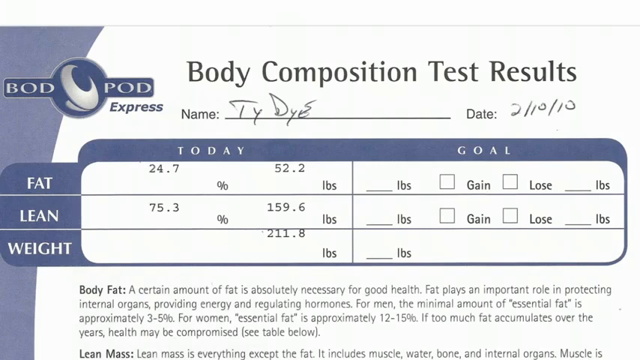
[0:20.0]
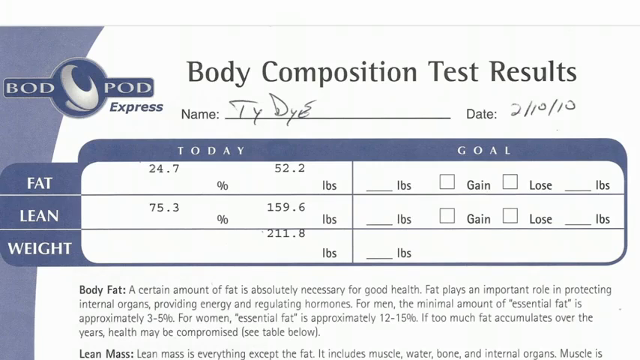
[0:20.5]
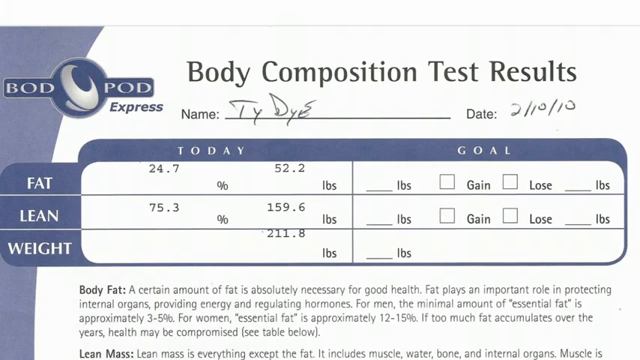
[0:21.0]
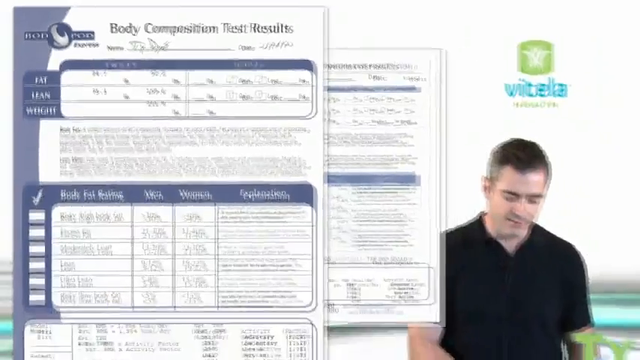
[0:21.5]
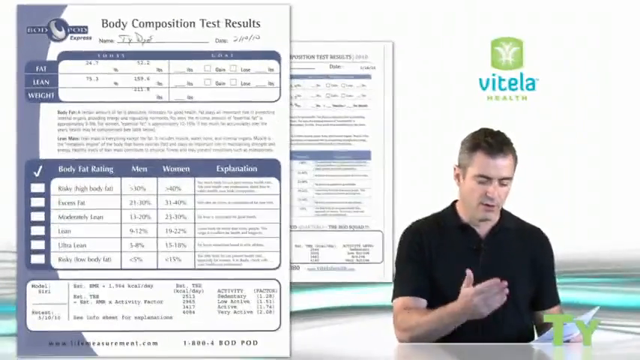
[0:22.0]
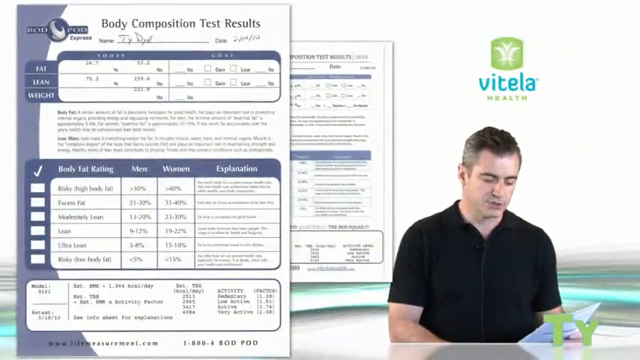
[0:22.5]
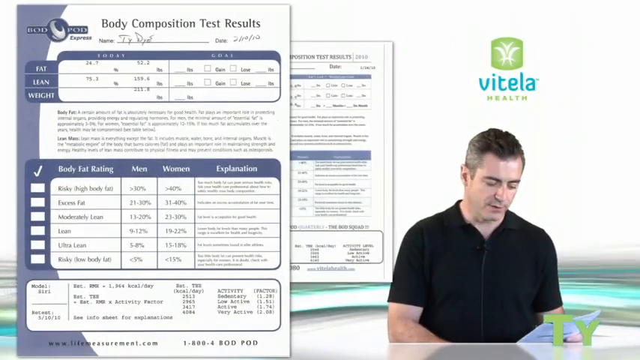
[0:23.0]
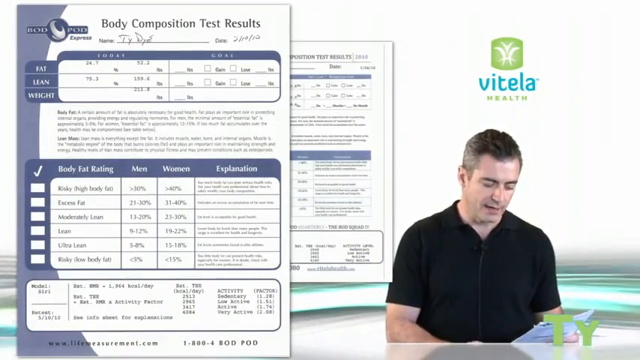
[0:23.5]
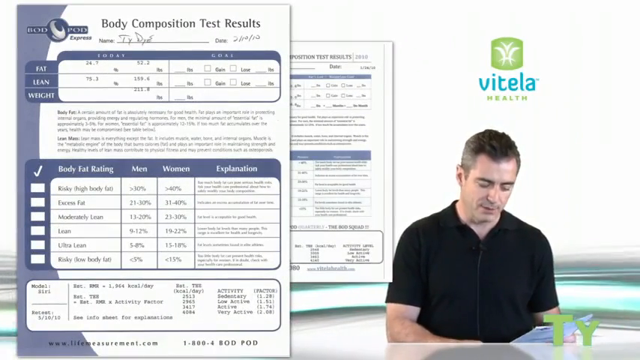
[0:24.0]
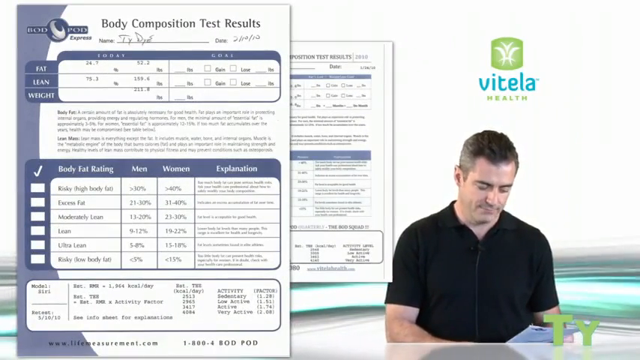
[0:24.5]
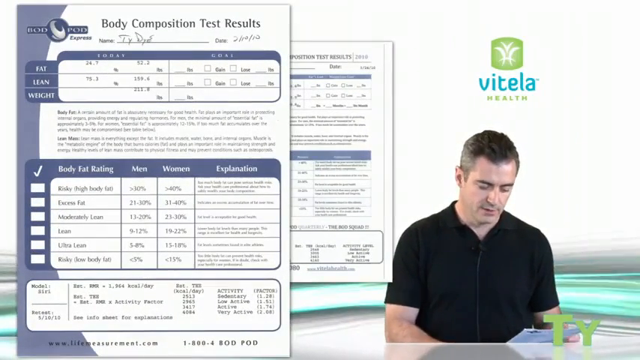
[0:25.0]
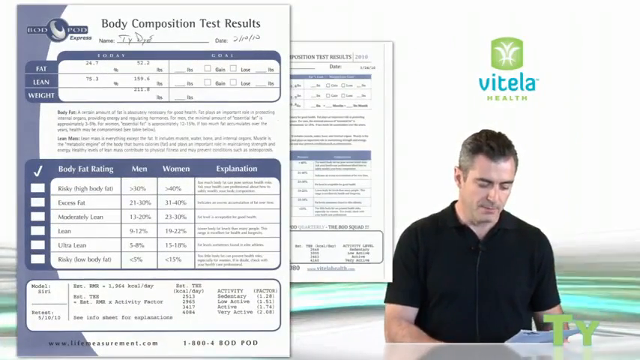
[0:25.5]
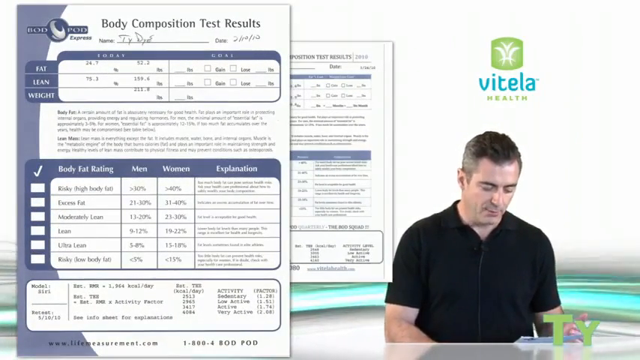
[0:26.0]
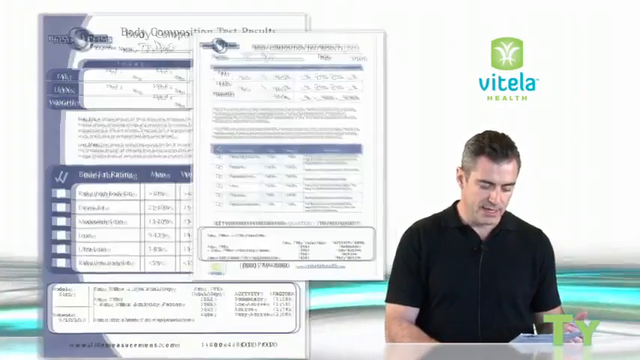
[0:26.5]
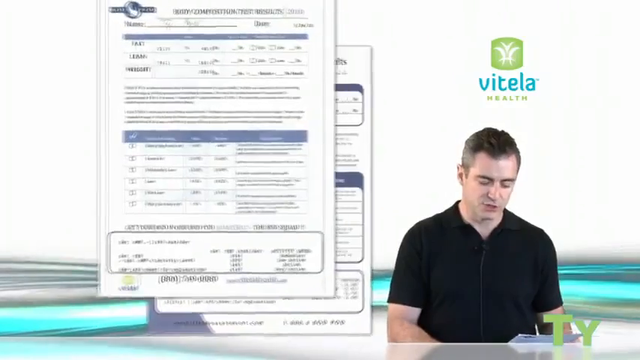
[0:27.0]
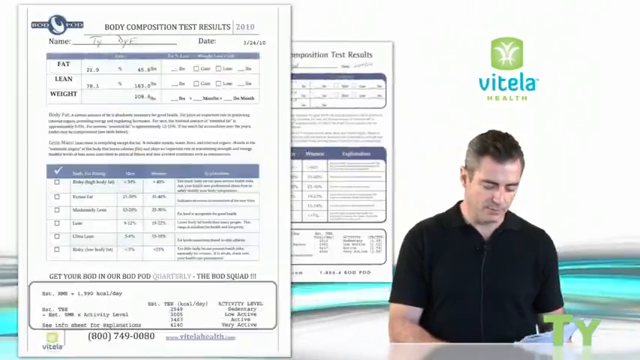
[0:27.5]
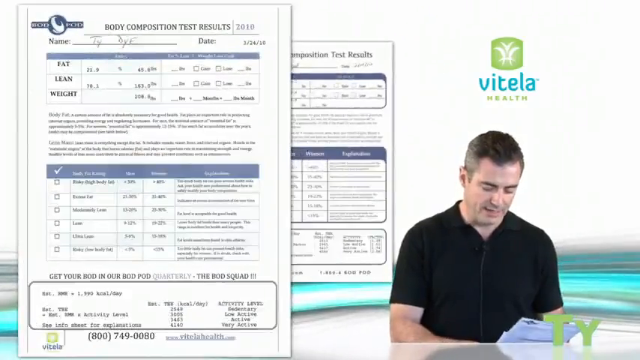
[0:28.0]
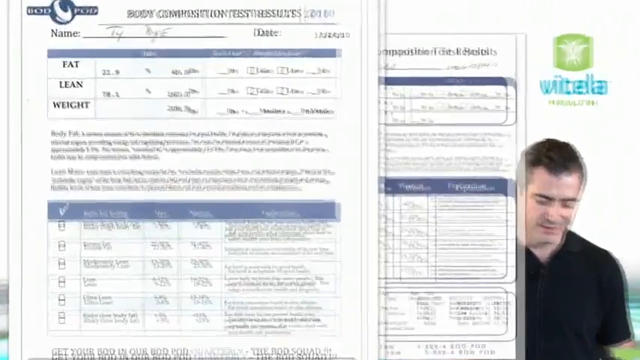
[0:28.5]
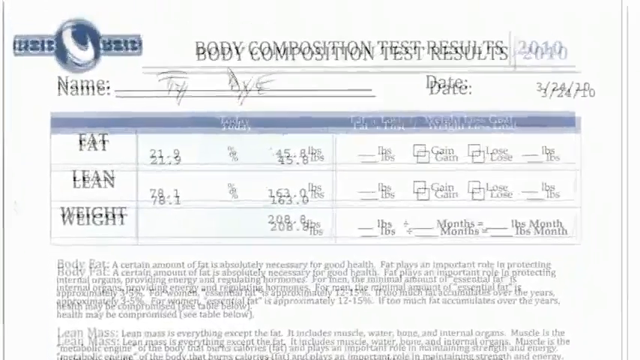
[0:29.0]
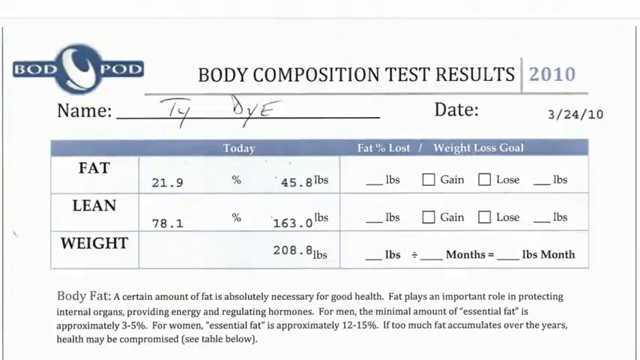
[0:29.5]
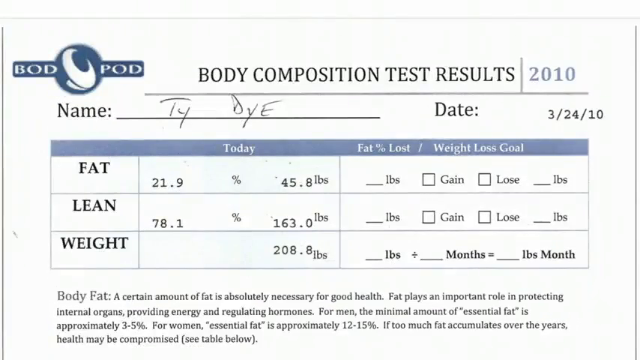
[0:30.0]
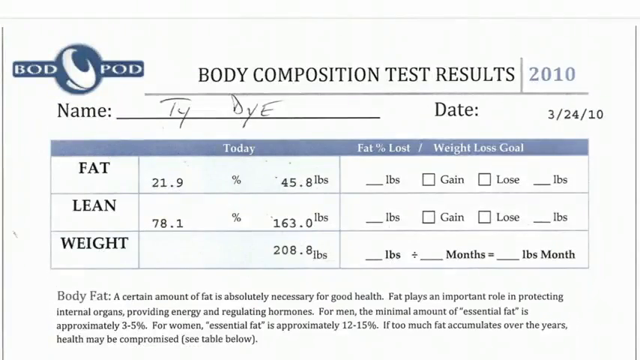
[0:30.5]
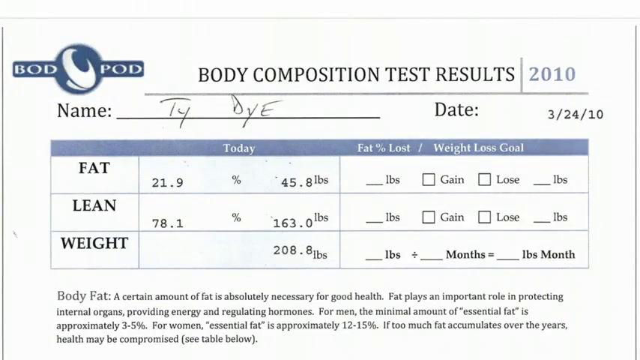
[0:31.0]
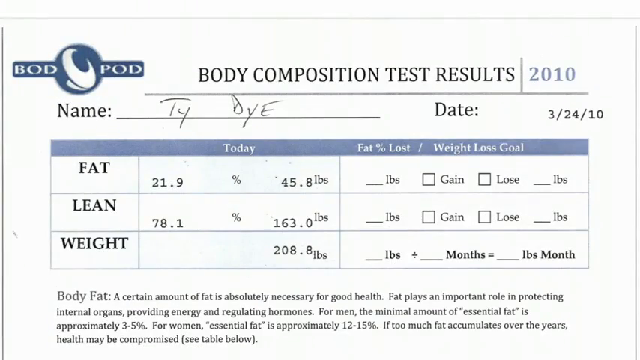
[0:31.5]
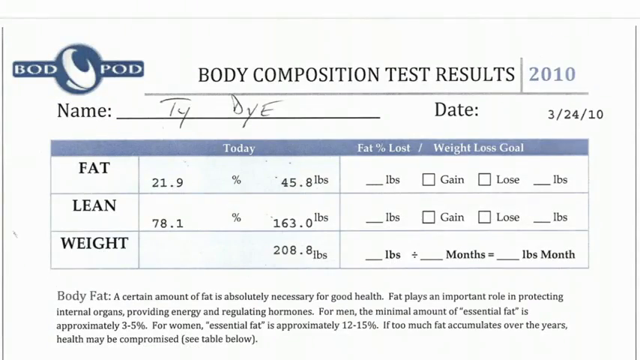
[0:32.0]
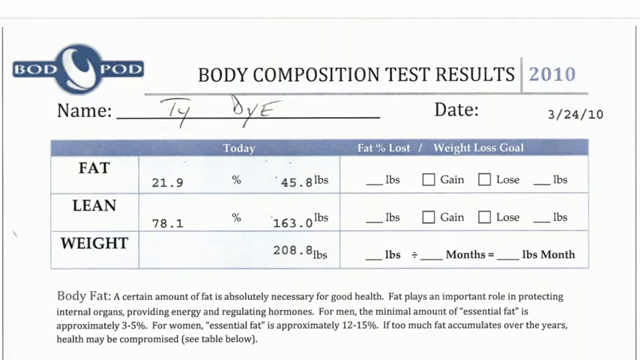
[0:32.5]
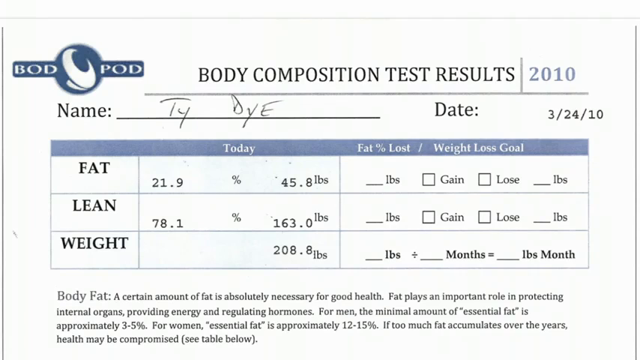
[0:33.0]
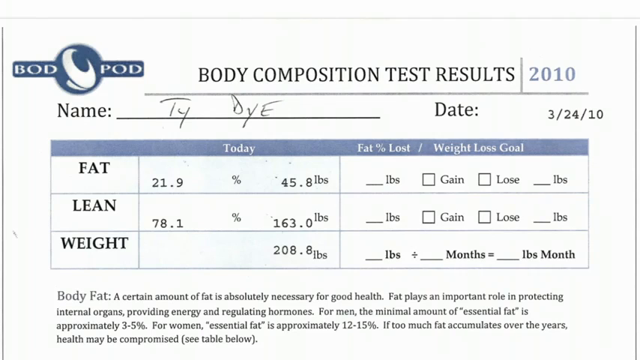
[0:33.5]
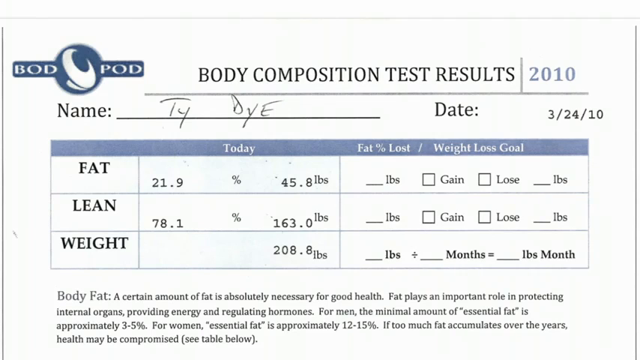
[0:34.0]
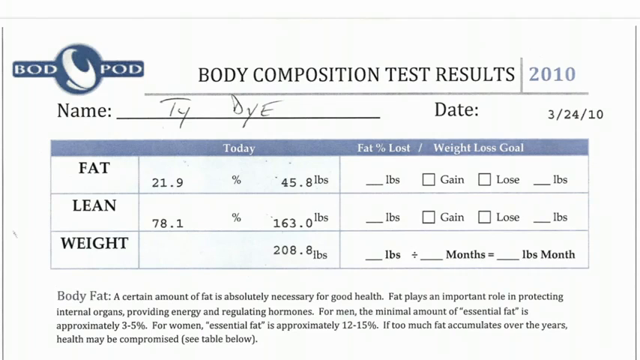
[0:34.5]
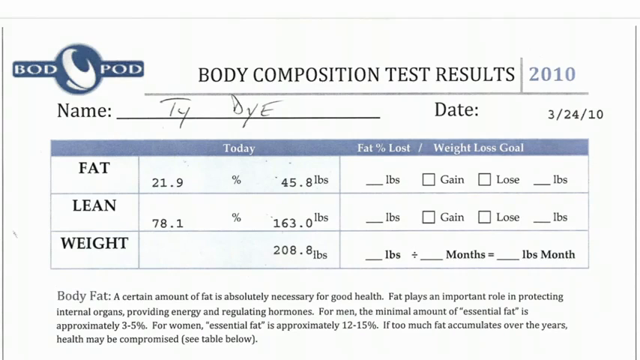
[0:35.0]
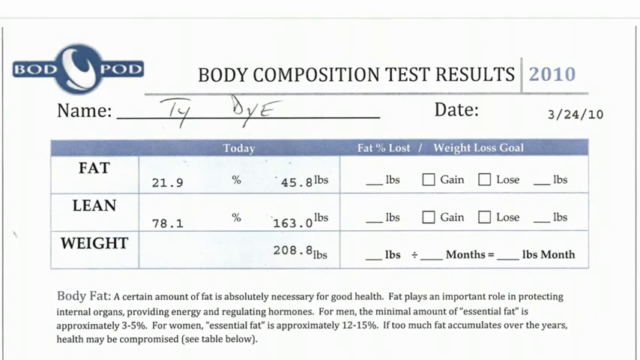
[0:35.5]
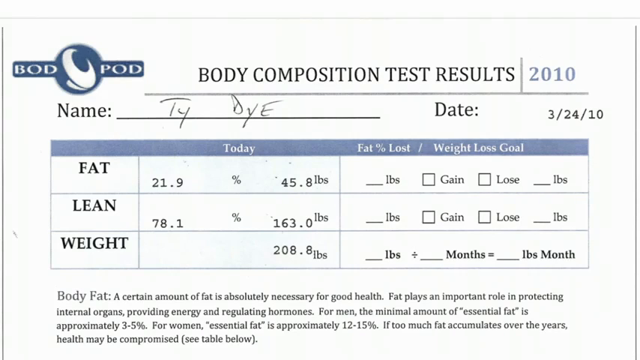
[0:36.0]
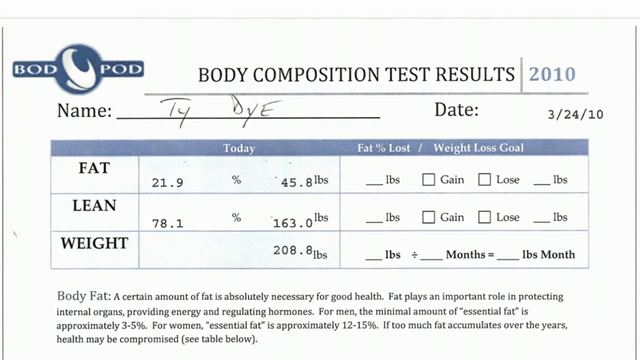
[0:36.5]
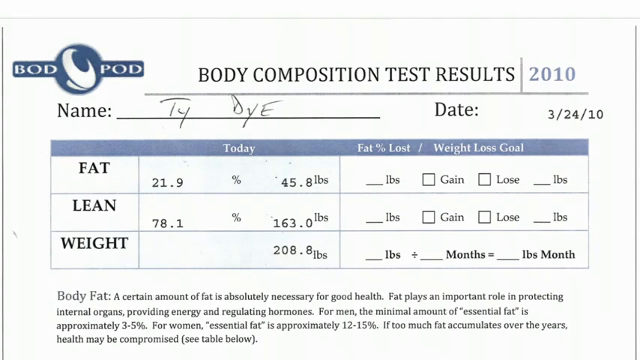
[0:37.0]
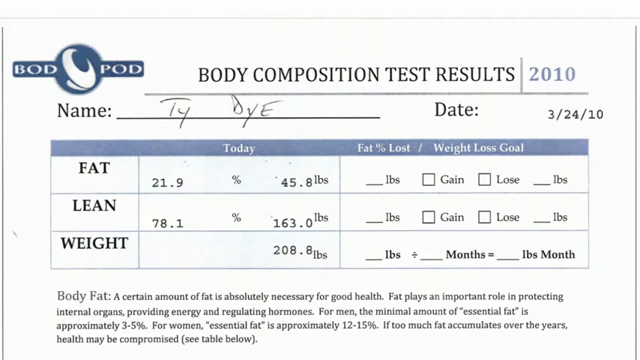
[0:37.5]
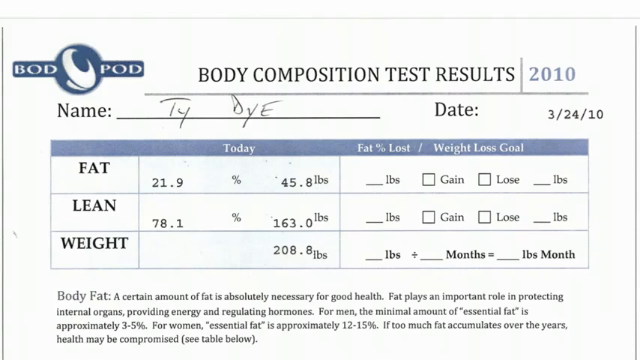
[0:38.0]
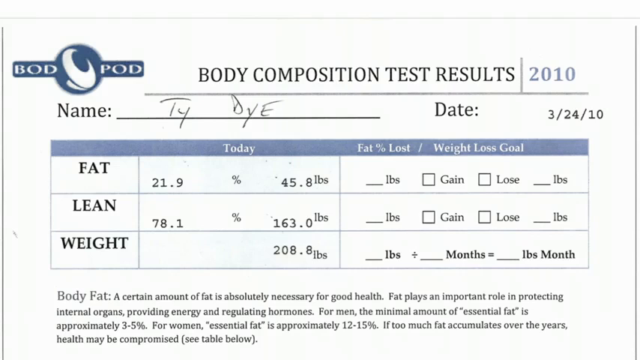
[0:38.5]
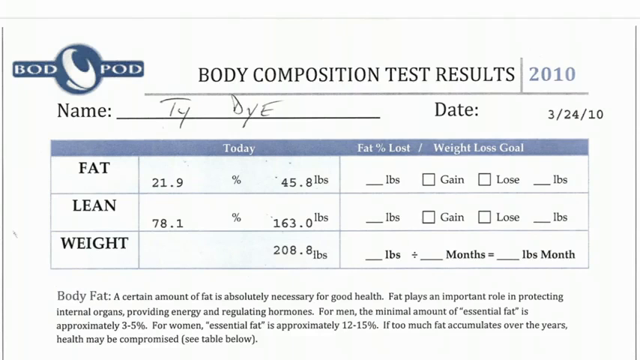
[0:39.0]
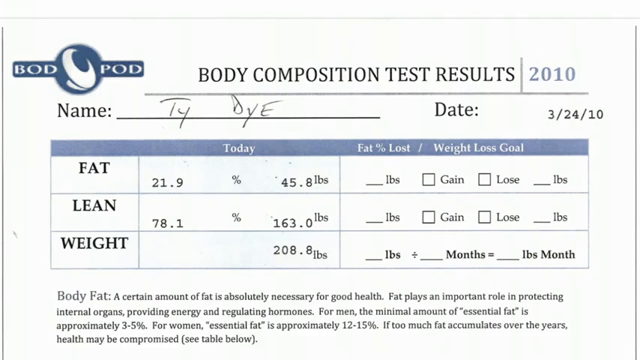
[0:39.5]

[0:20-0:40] An image labeled "Body Composition Test Results" is shown, with the name Ty Dye. In the center of the screen are three horizontal columns labeled, top to bottom, "fat", "lean", and "weight", with "today" on the left-hand side and "goal" on the right-hand side. Under today, fat reads "24.7%, 52.2 pounds", lean reads "75.3%, 159.6 pounds", and weight reads "211.8 pounds". The goal markers are all empty. The image then scrolls back out. The screen changes and zooms in on a paper labeled "Body Composition Test Results". In the upper left-hand corner it says "BODPOD", the name under it is Ty Dye, and the date is "3-24-10". The same three horizontal columns are labeled, top to bottom, fat, lean, and weight, and across the top it says "today", "percent fat lost", and "weight loss goal". The only numbers filled in are fat, "21.9%, 45.8 pounds", and lean, "78.1%, 163 pounds"; under weight it says "208 pounds". Below that it says "Body fat. A certain amount of fat is absolutely necessary for good health. Fat plays an important role in protecting internal organs, providing energy, and regulating hormones. For men, the minimal amount of essential fat is approximately 3 - 5%."